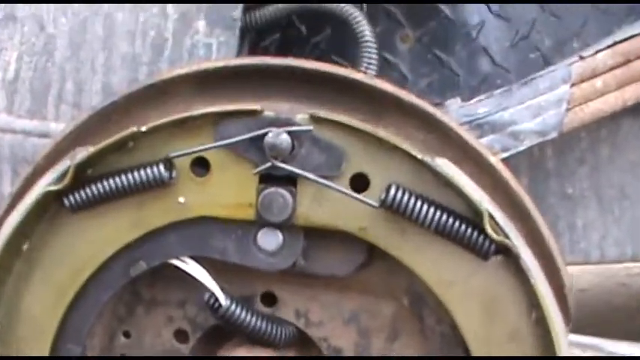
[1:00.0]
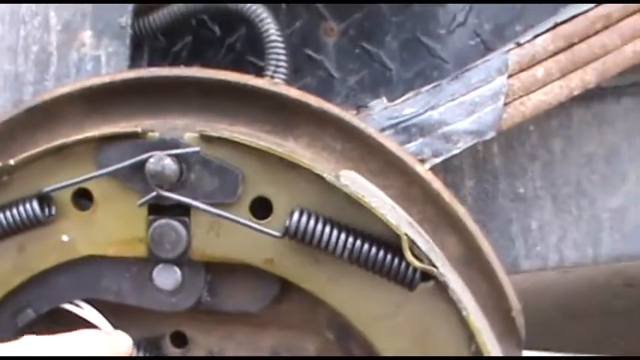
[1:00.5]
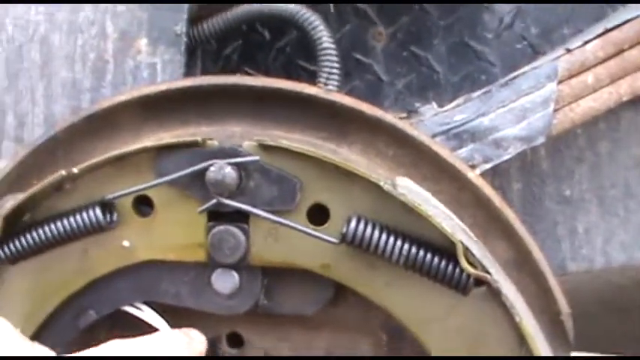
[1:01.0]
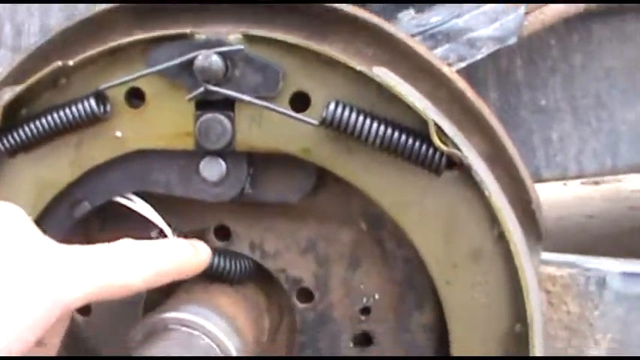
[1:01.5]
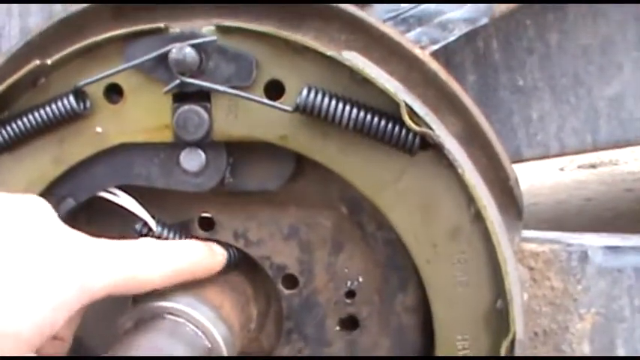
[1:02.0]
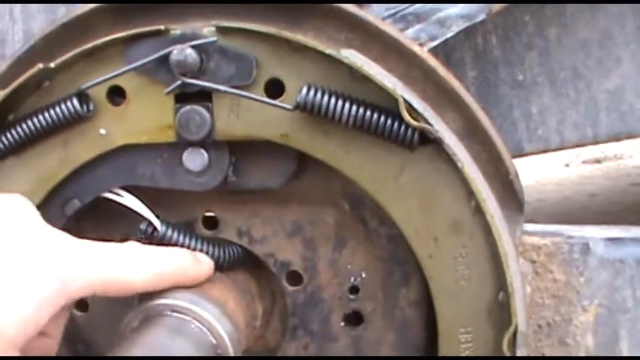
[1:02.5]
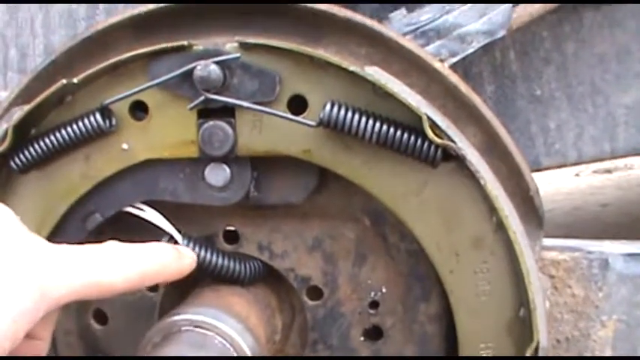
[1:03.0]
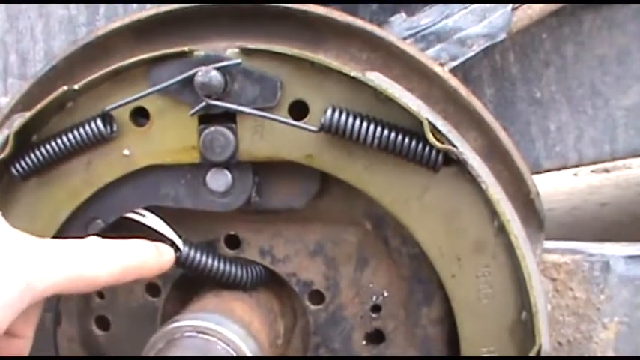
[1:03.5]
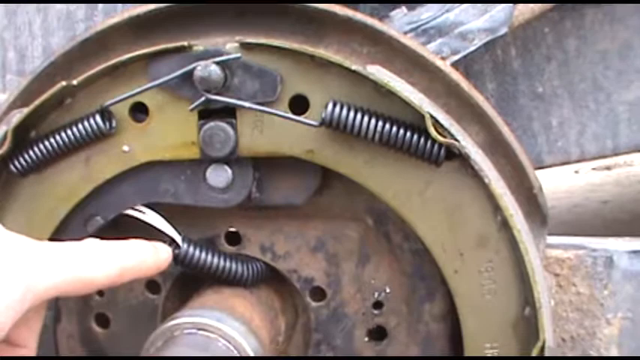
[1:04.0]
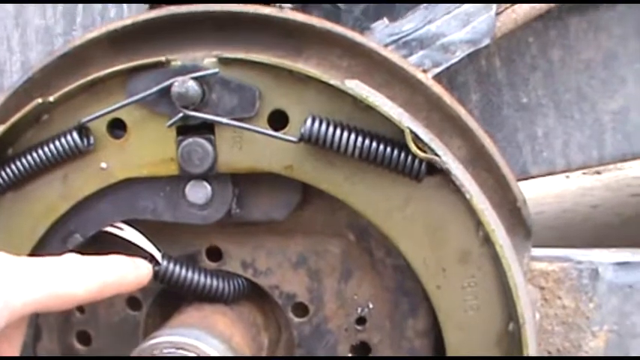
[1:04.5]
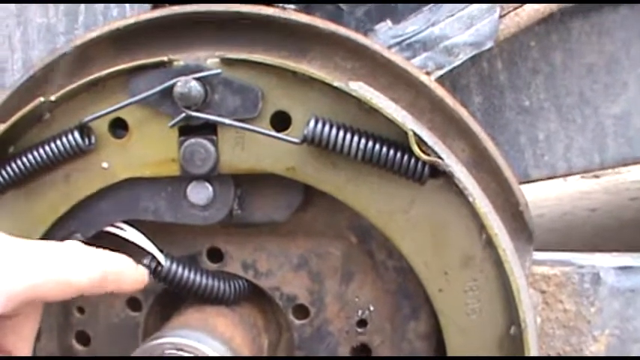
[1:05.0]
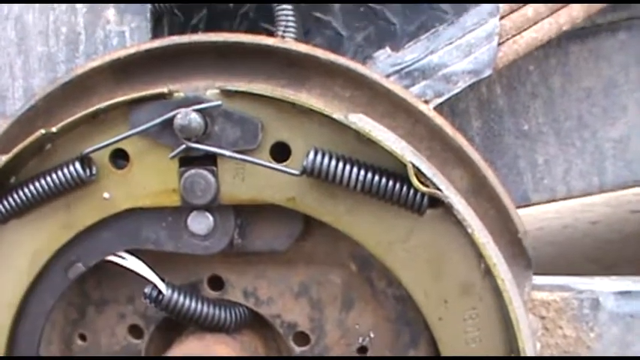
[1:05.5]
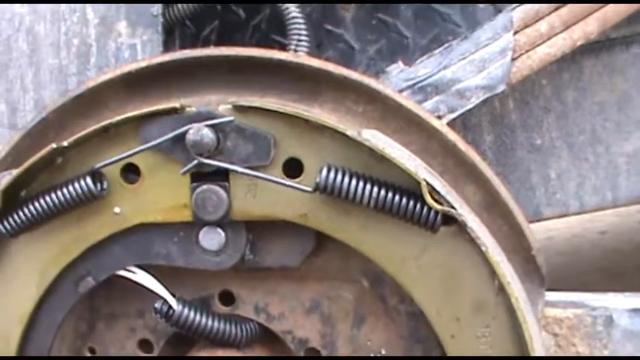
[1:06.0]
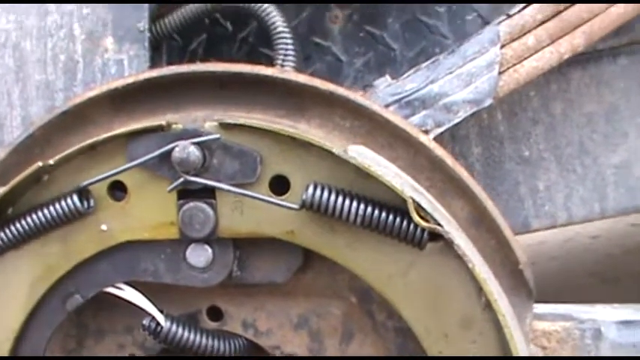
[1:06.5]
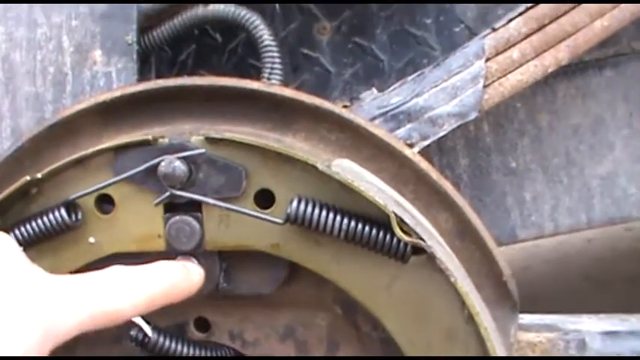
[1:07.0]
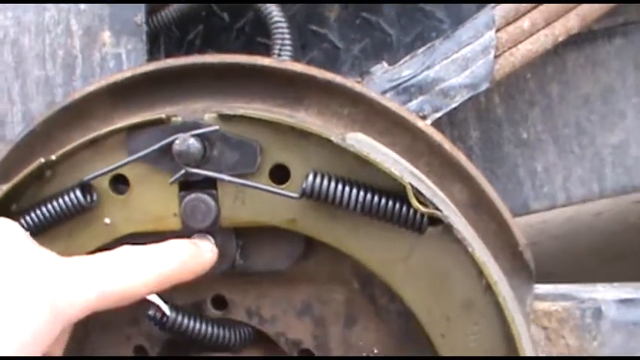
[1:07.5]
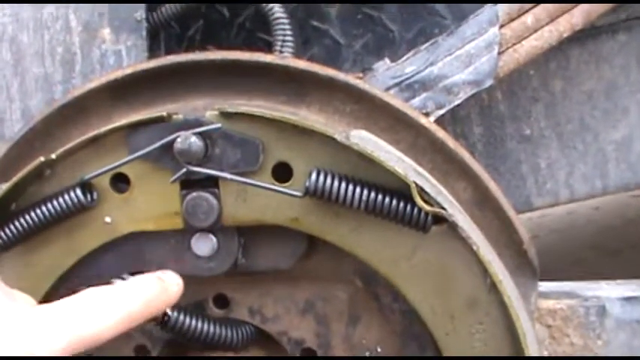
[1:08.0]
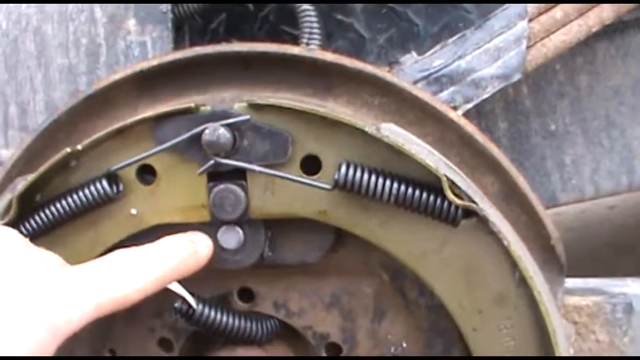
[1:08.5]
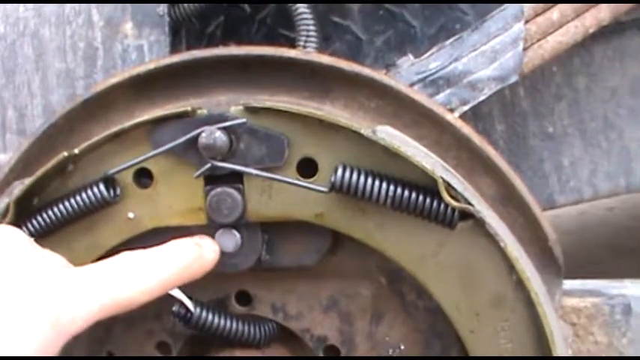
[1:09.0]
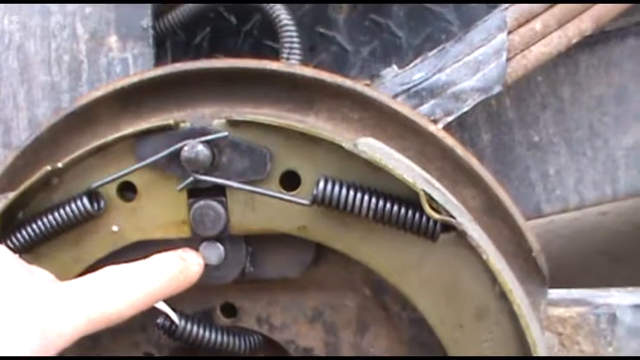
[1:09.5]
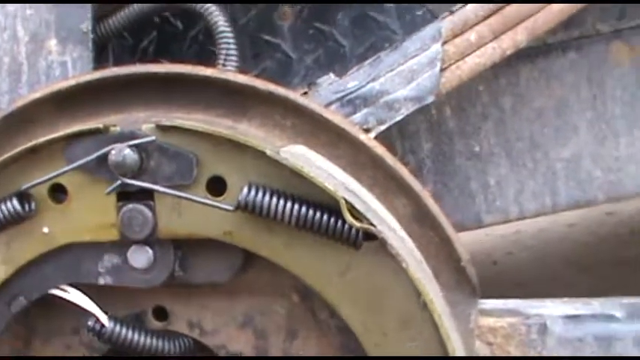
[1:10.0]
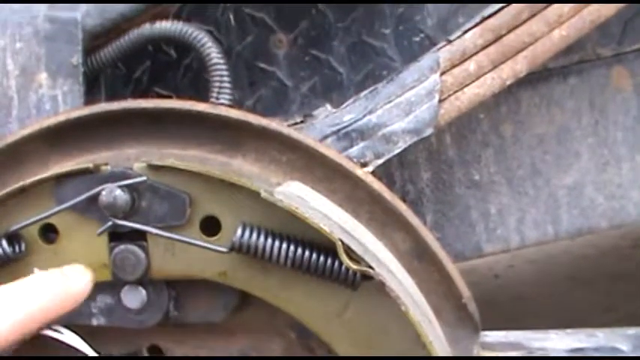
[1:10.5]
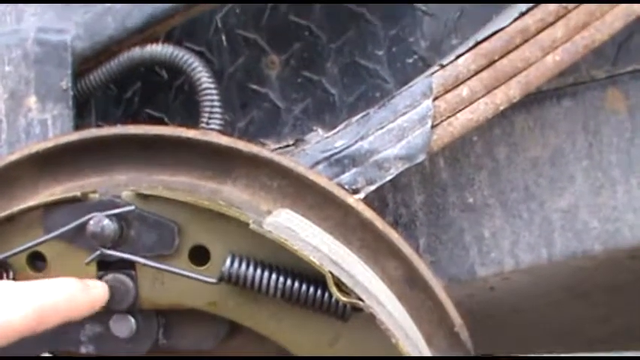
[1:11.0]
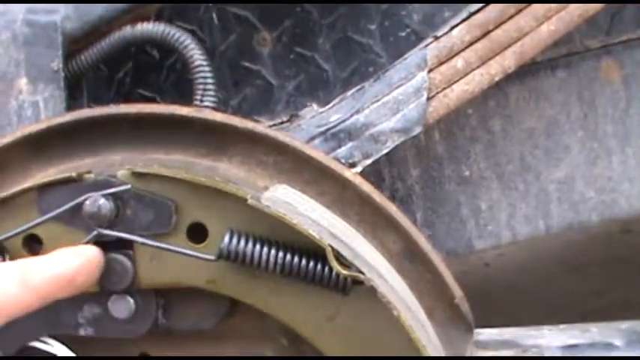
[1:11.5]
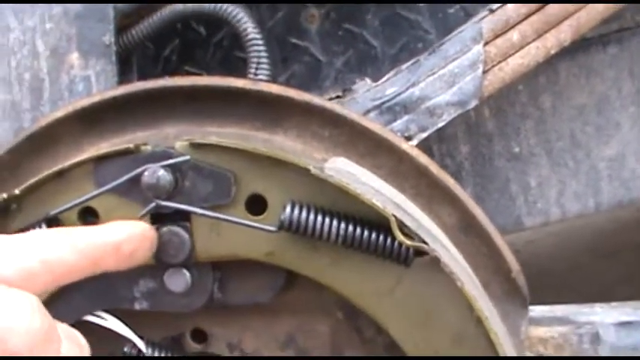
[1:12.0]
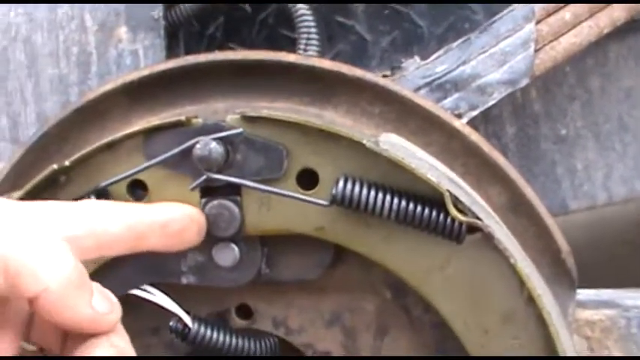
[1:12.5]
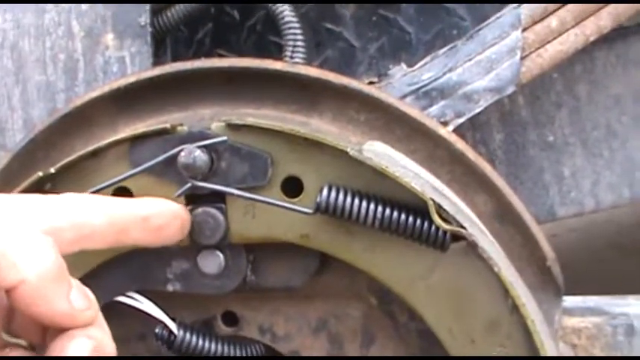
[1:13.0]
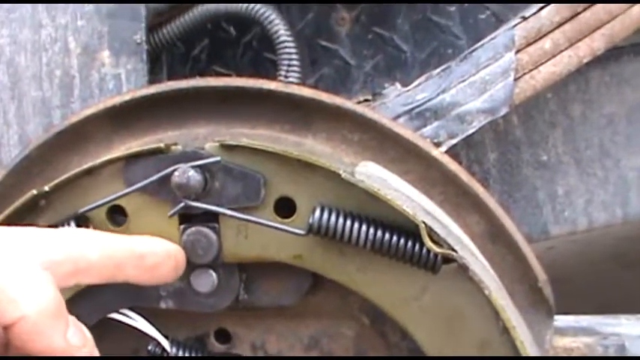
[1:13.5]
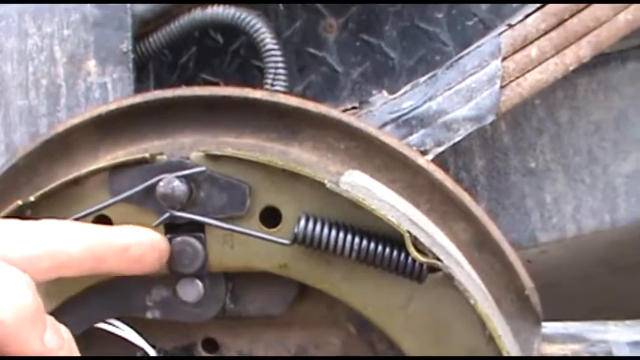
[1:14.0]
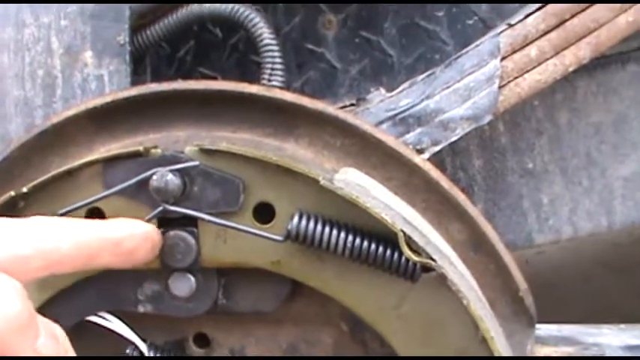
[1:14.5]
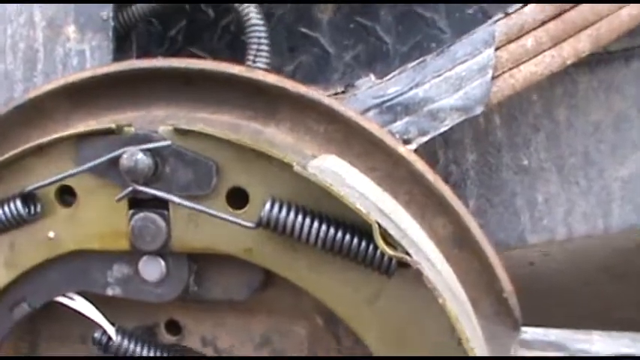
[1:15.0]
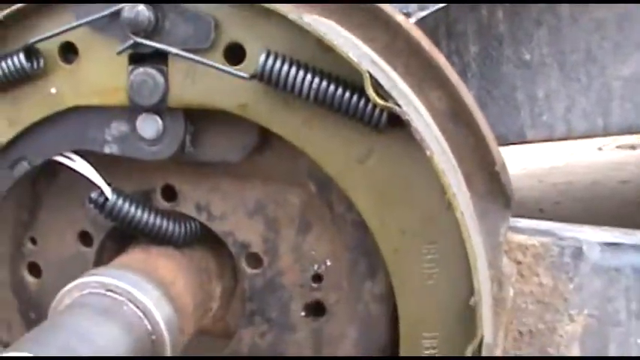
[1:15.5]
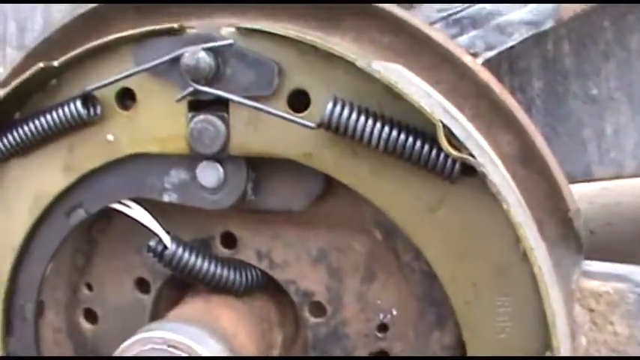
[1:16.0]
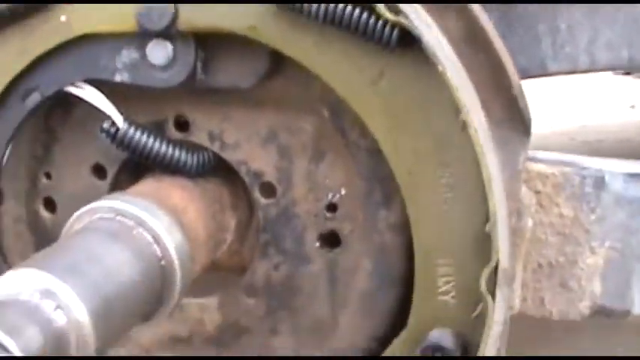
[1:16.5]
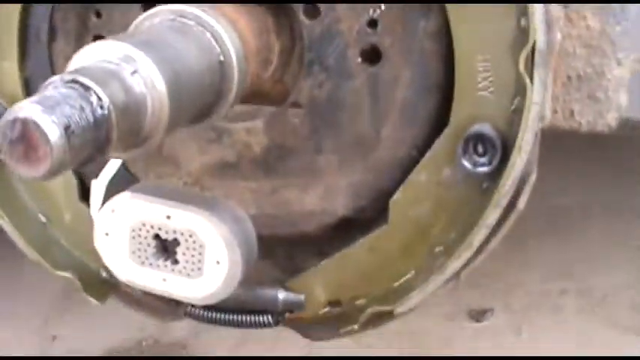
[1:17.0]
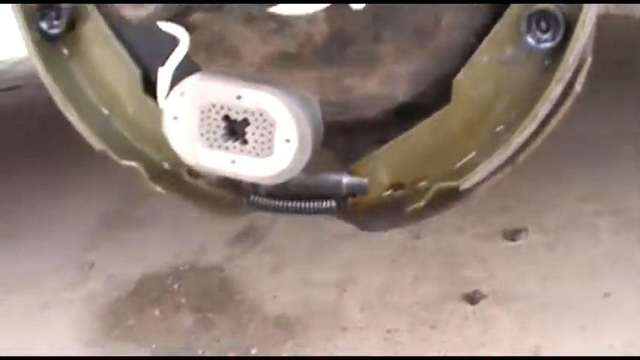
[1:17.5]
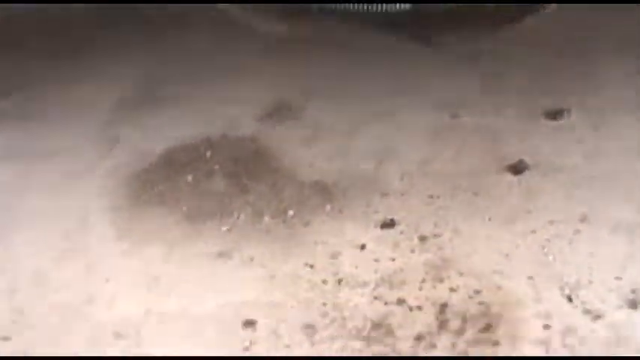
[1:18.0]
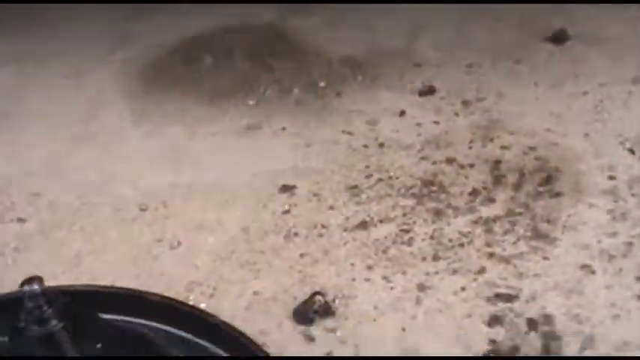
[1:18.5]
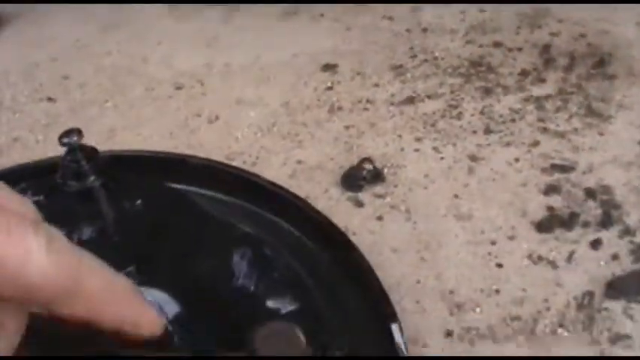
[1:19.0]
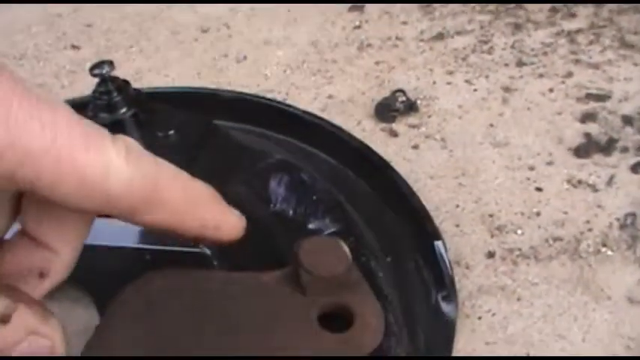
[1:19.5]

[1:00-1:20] The camera looks at the upper part with the coils, then moves a little to the right. A pointer finger comes in from the left and points just below the two bolts, just above the circular part that slides into the center of the tire. Two wires come down there with black wrapped around them for protection; the finger points at them, moves up and down along them, touches the end, and moves off. The finger comes back to the third bolt down from the top, touching it on the left side, then touches the one above it. It looks kind of loose: when moved it wiggles a little, and pulling on it with a fingernail makes it move. The camera goes down to the concrete ground, which has grime all over it where they have been working. In the bottom left corner is the black plate that goes over it, and a finger coming down from the left points at it. There is a big indentation on its back, probably from the bolt shaking around and causing damage. The pointer finger points down with the middle finger tucked under it, then the hand goes off the left side of the frame.